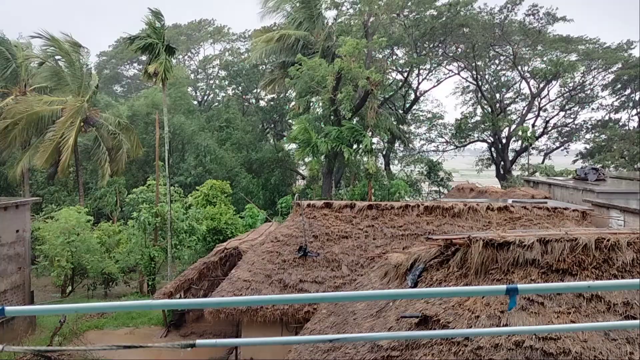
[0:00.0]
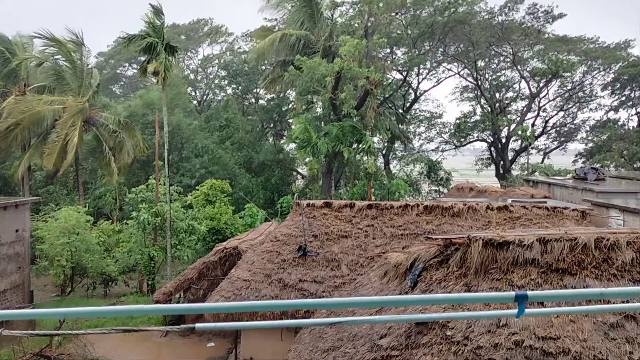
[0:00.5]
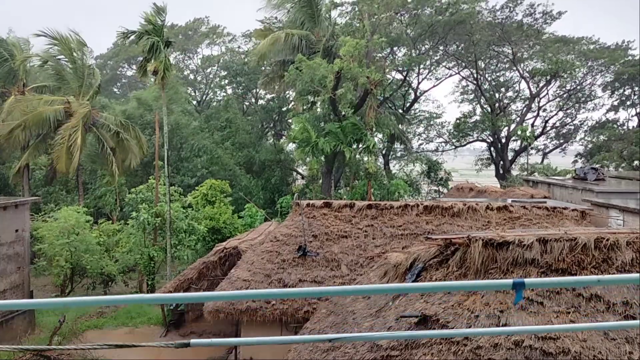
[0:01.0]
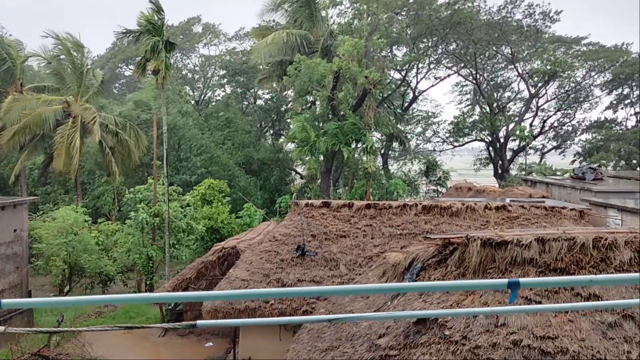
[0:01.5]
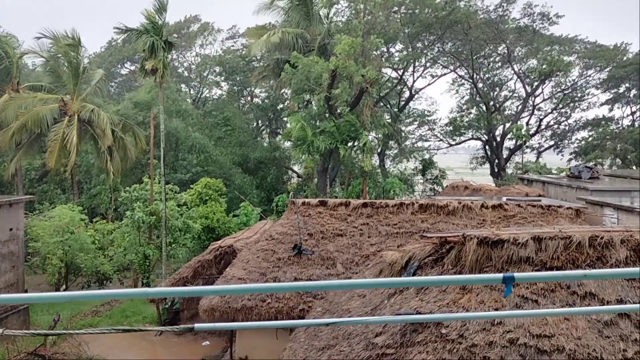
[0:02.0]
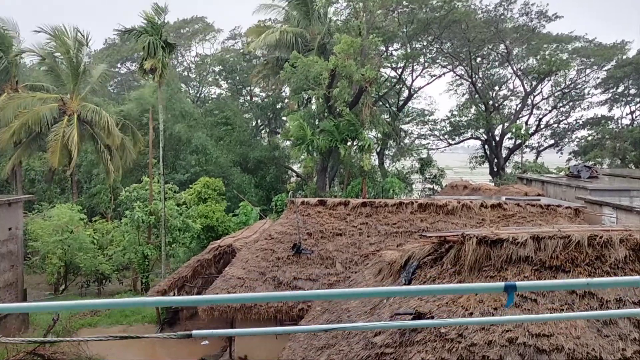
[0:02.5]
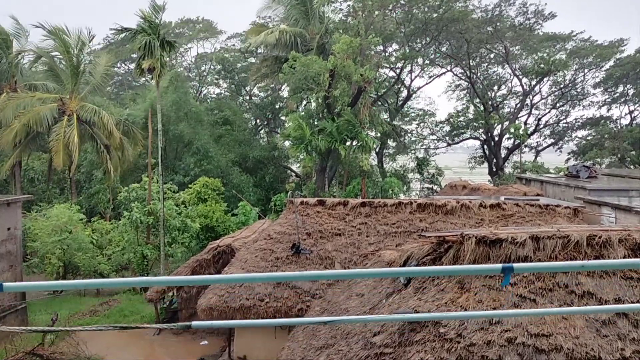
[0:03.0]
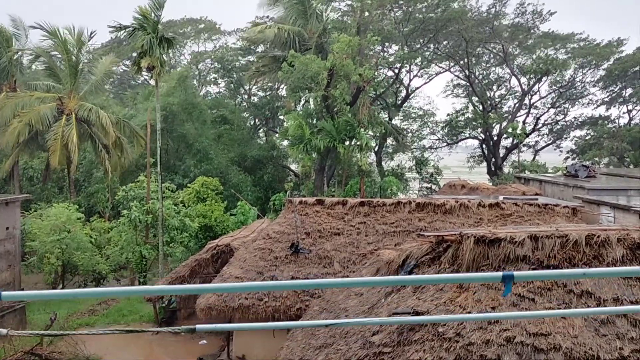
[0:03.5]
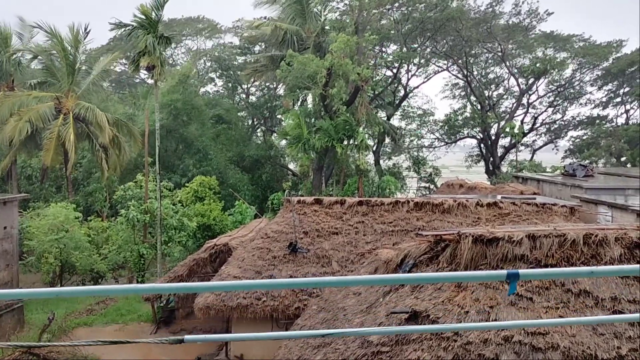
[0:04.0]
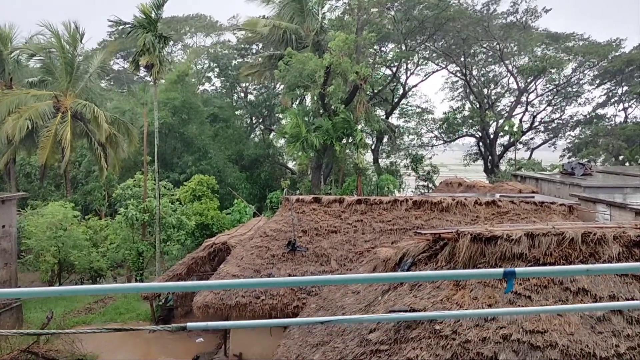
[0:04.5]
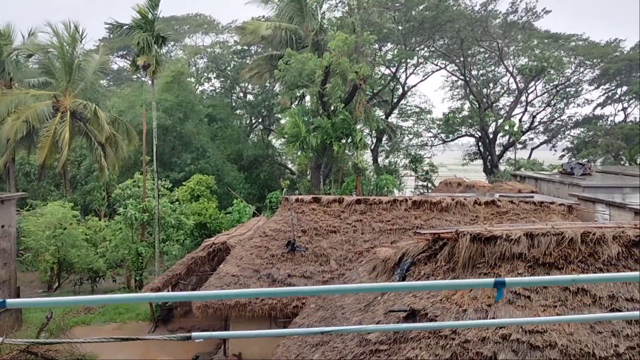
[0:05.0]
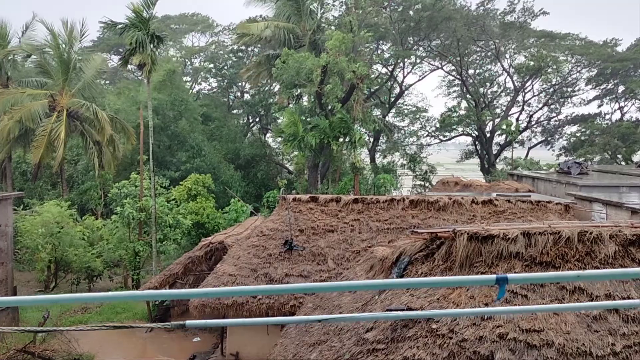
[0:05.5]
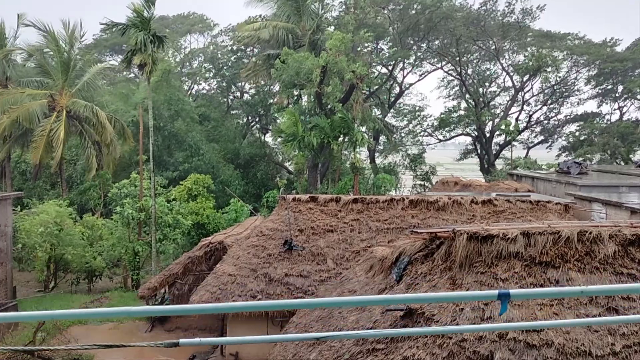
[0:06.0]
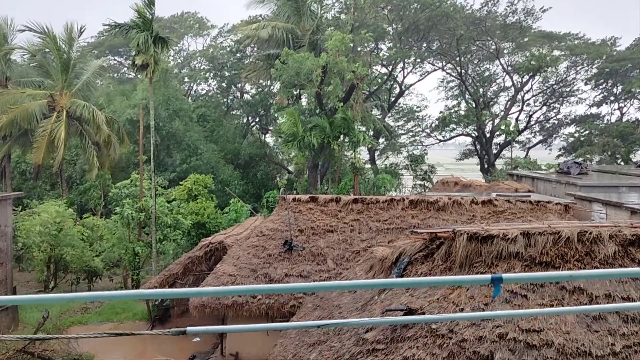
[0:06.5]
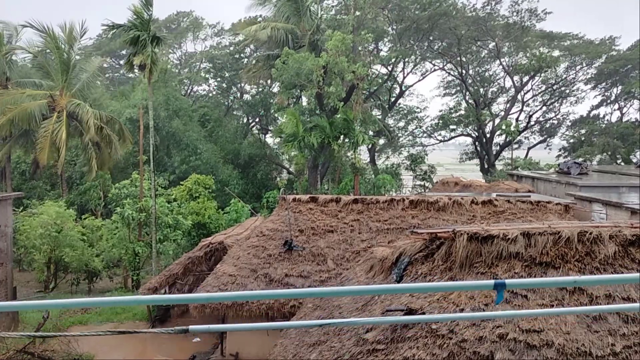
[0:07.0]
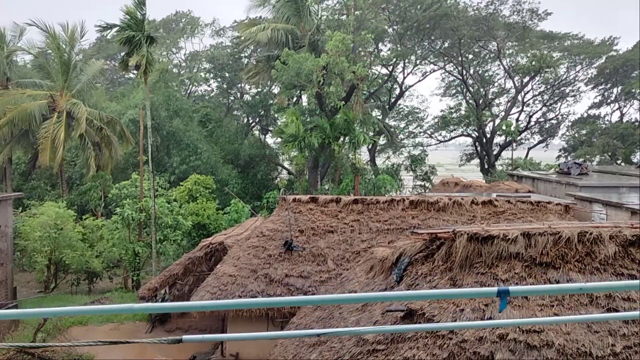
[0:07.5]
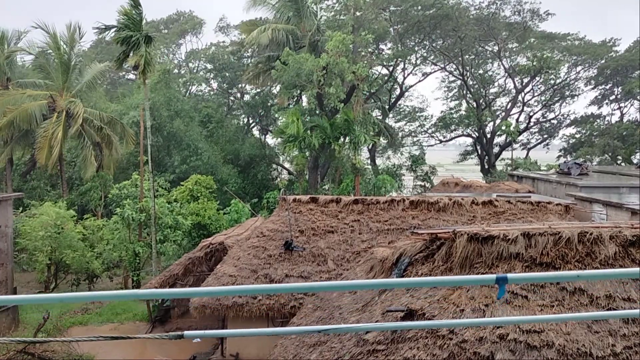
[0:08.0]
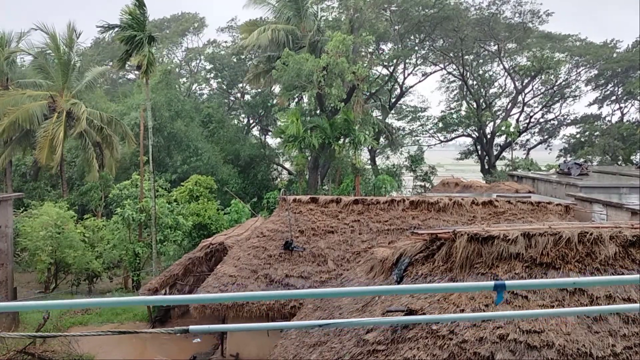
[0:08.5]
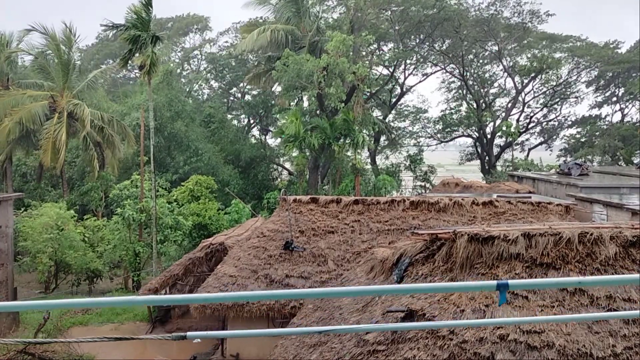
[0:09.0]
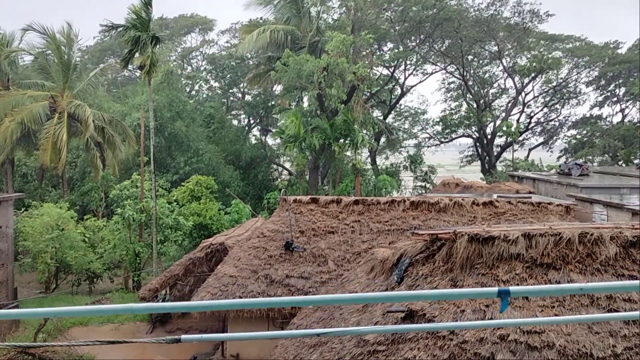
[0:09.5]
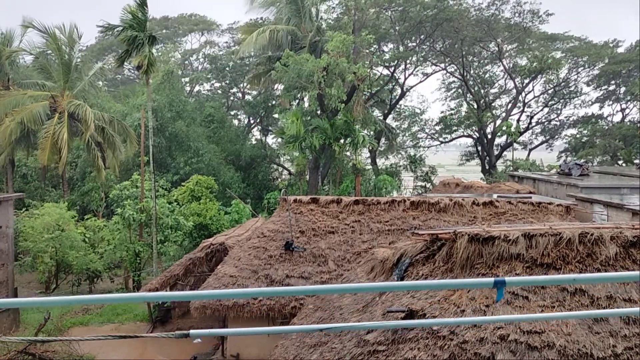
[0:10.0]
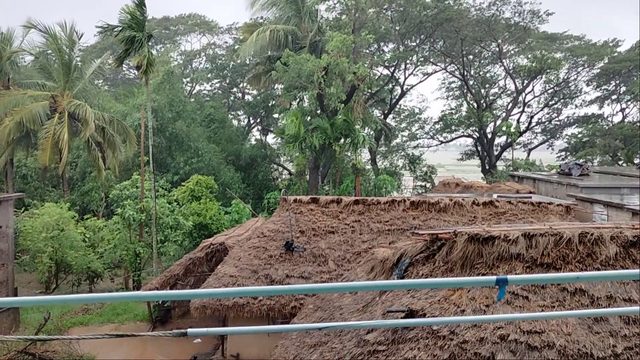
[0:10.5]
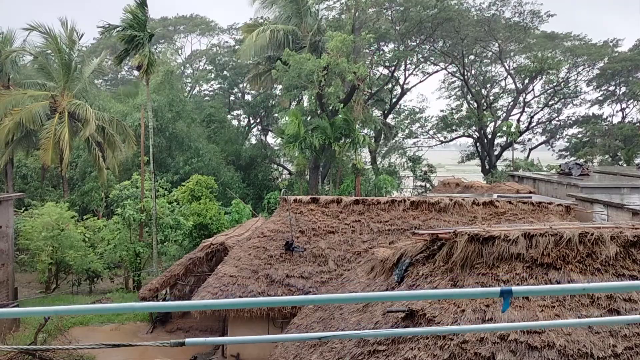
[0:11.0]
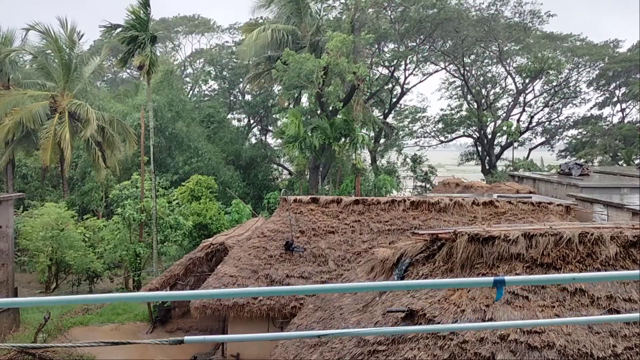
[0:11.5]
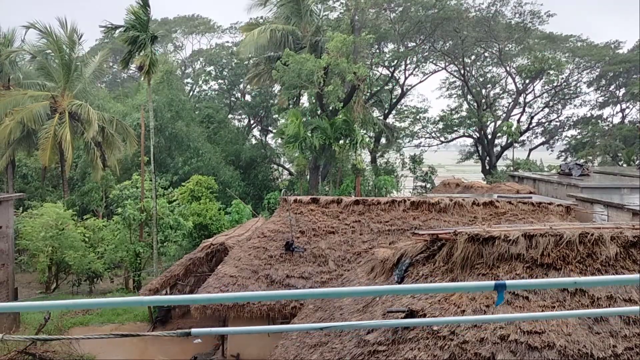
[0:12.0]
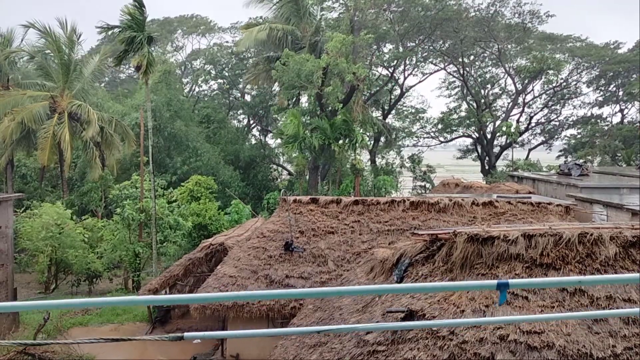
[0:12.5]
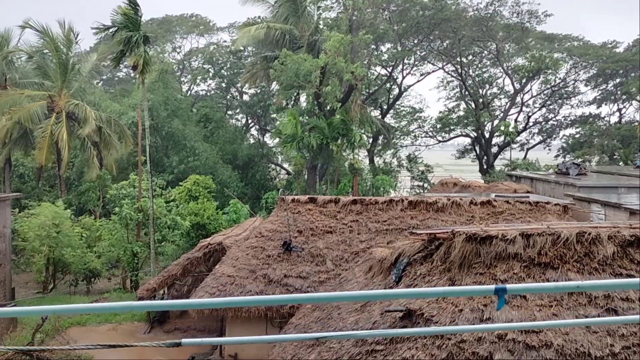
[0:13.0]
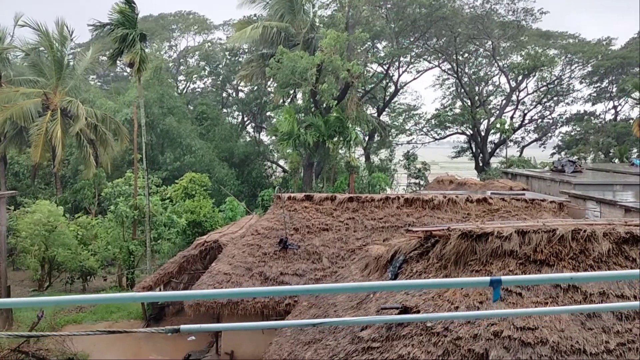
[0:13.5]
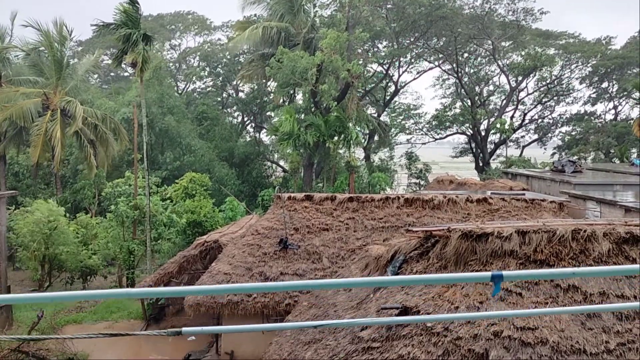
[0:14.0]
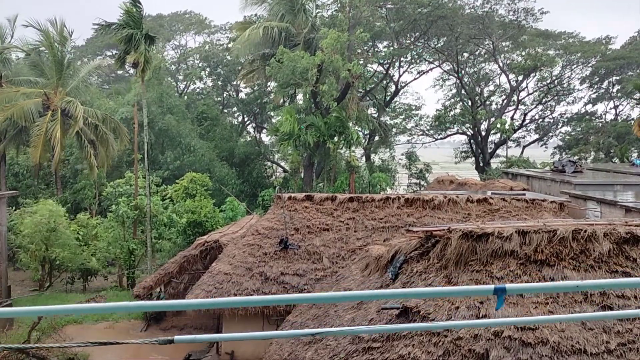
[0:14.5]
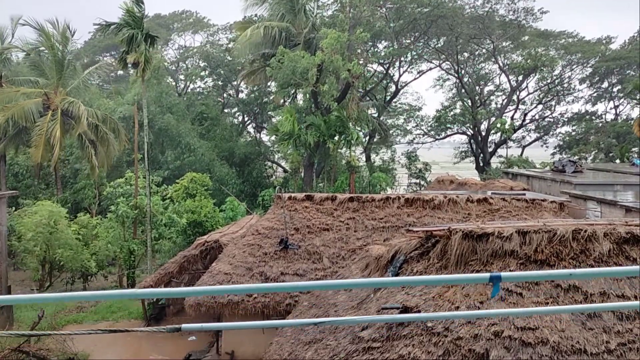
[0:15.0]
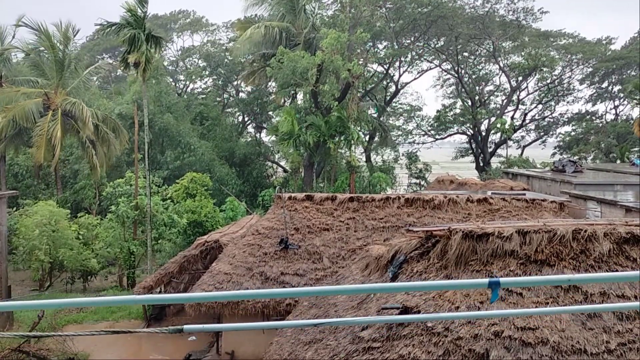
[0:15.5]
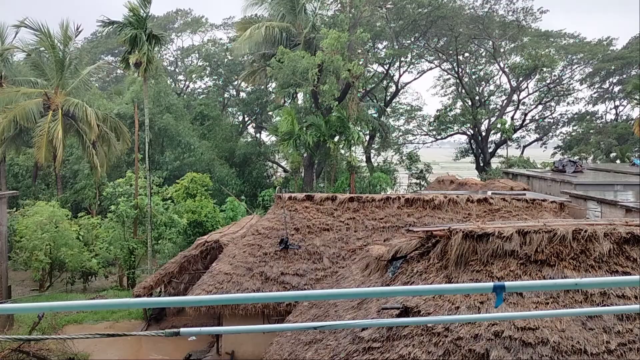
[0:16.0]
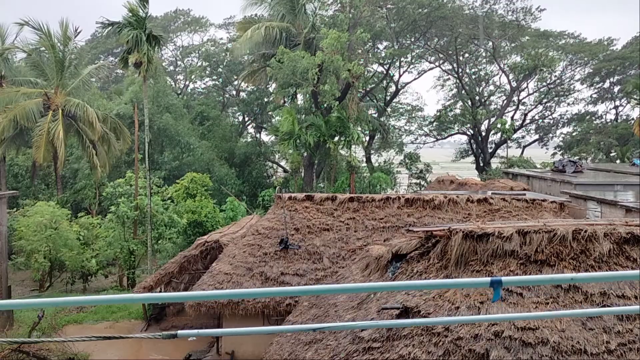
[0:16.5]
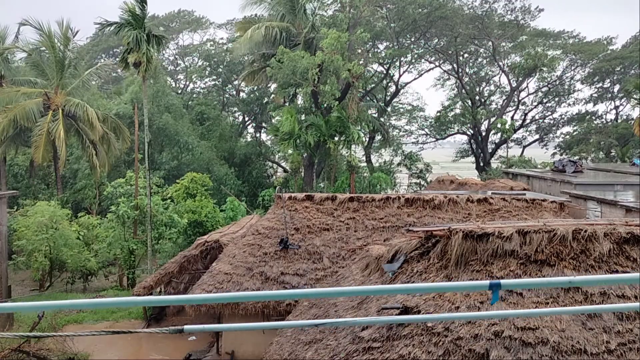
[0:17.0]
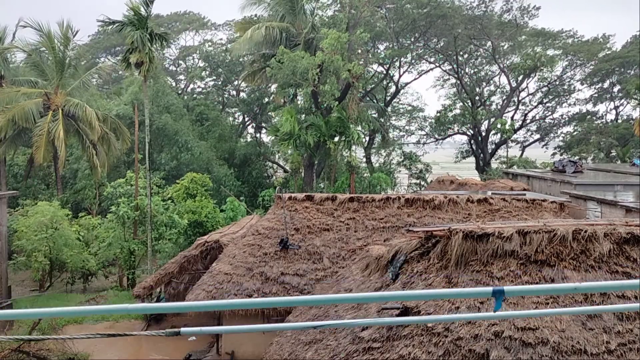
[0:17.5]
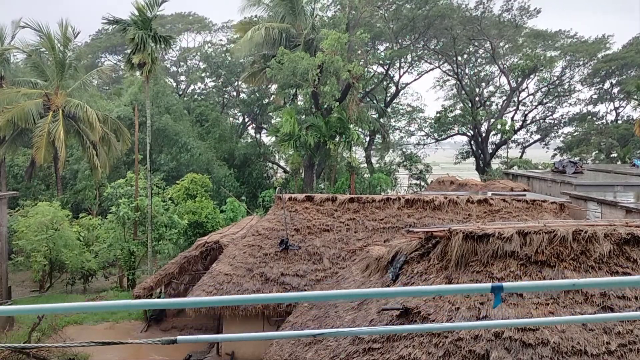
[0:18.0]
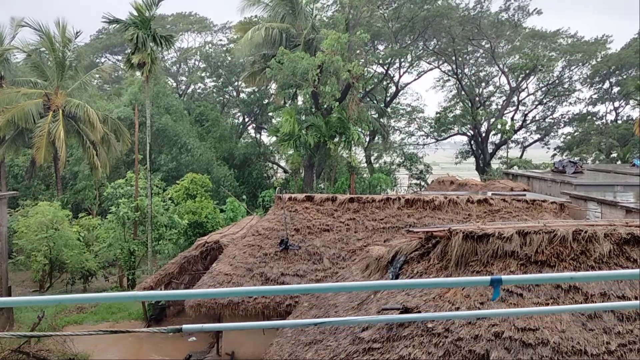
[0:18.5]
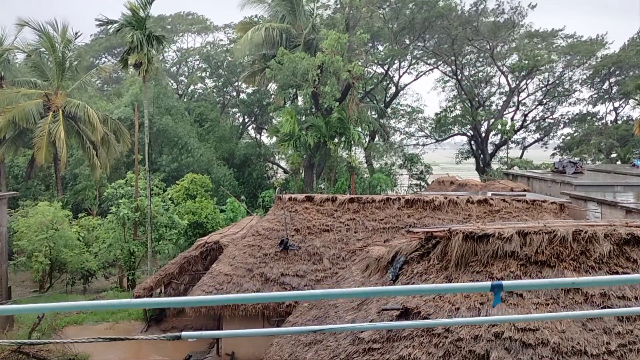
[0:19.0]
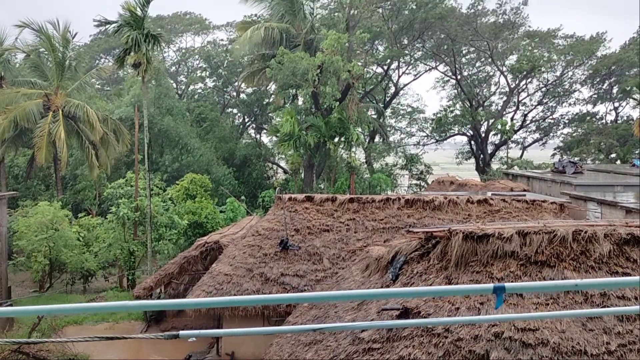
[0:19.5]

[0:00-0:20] An island-type area has palm trees and regular trees, which look large, swaying ever so lightly back and forth, not as if in a strong breeze. Two buildings stand side by side; they could look like one, and they are cut off so that mainly their tops are visible. The roofs look brown and do not look natural; it looks like long palms may have been put on top with some wood to make a slanted roof. The structures are possibly a type of shelter. On the ground there appears to be muddy water. In the front of the frame there are two lines, possibly electrical lines.